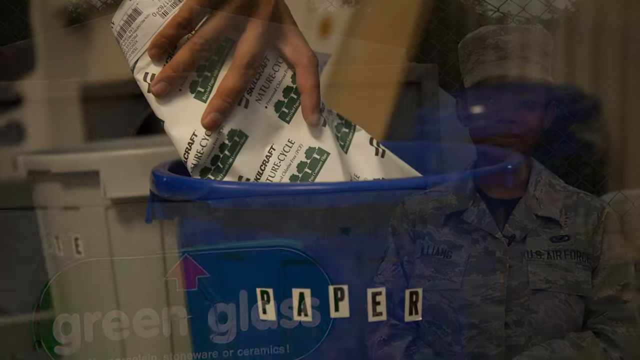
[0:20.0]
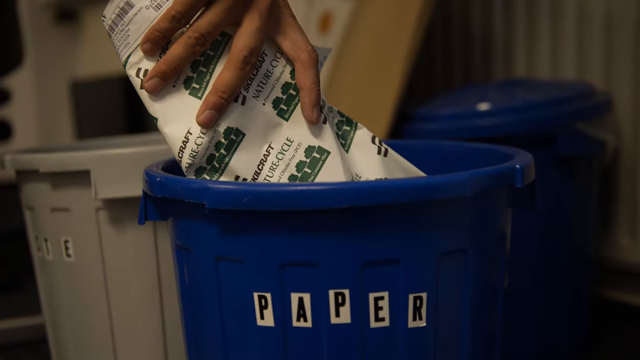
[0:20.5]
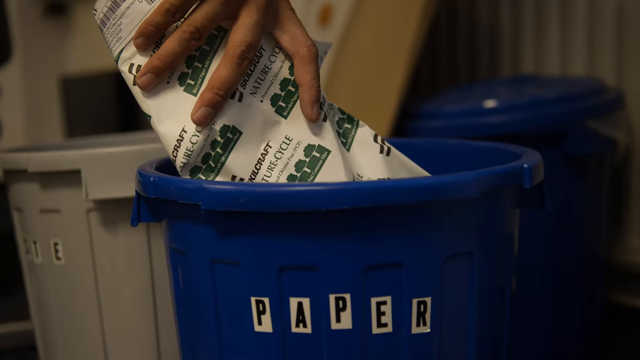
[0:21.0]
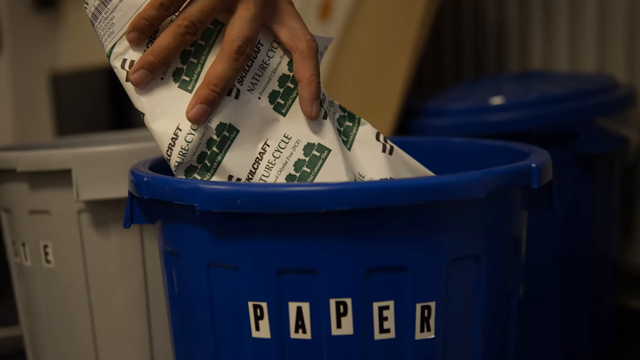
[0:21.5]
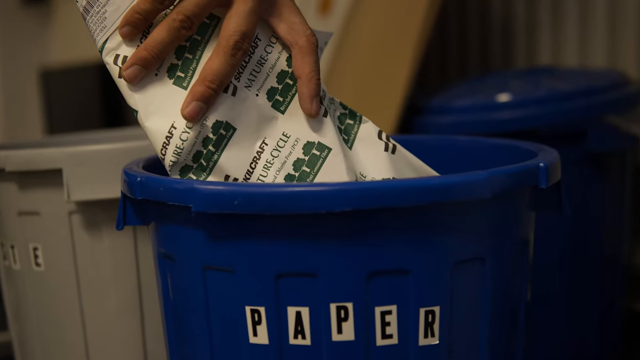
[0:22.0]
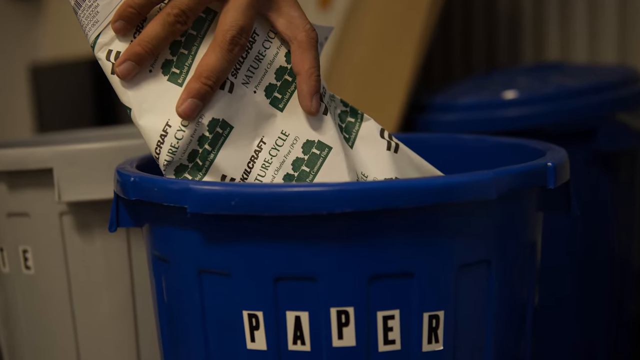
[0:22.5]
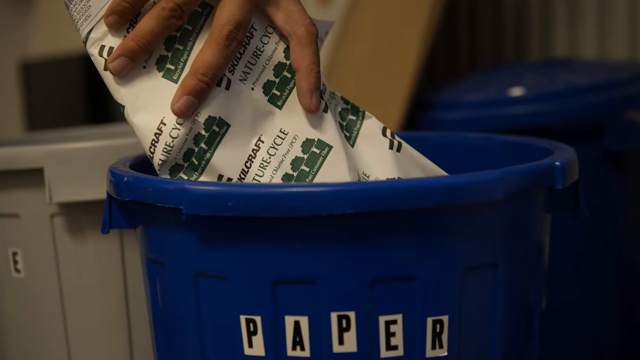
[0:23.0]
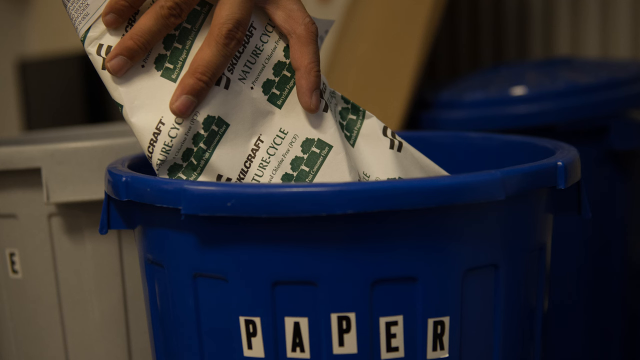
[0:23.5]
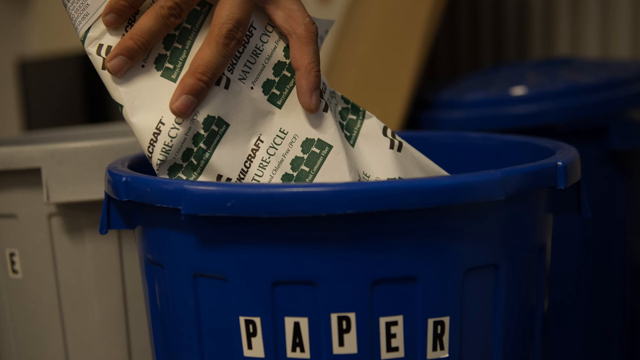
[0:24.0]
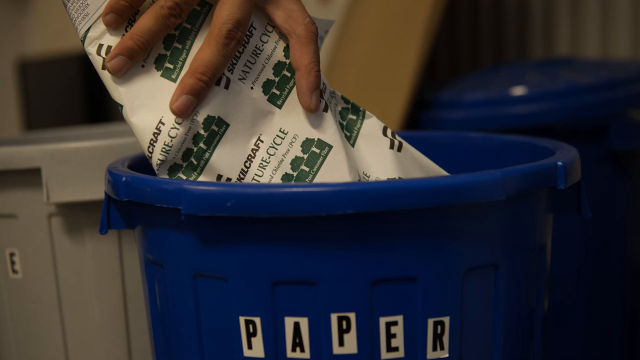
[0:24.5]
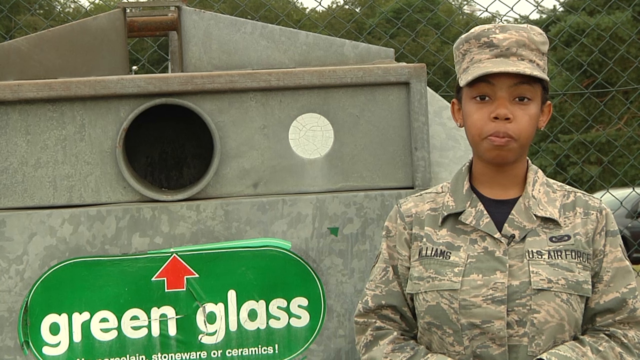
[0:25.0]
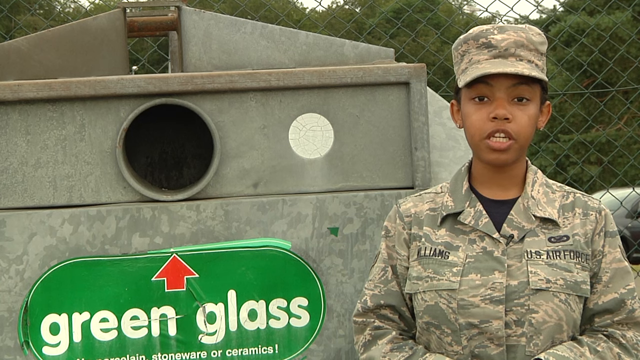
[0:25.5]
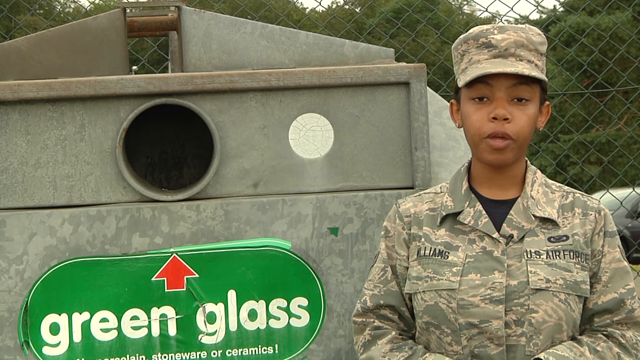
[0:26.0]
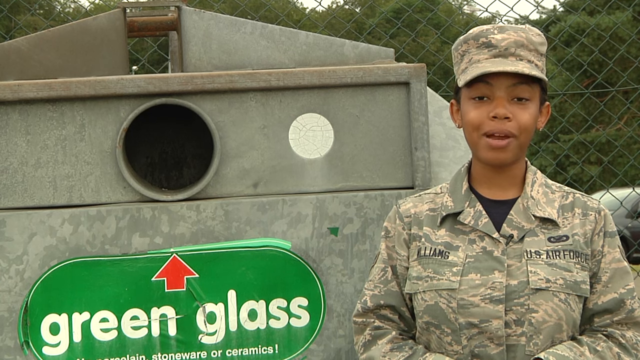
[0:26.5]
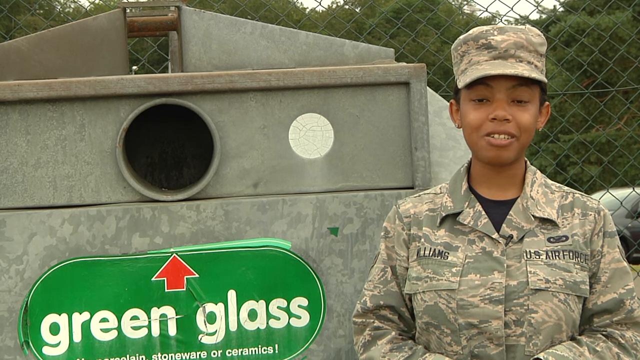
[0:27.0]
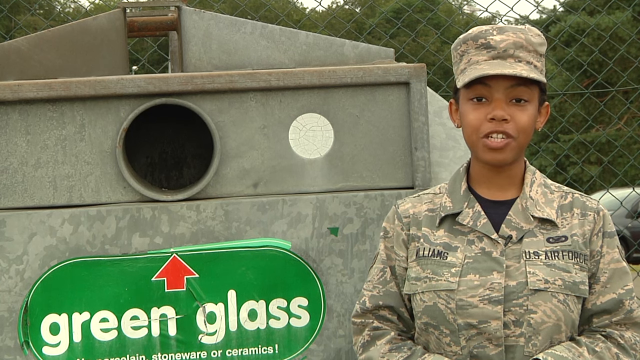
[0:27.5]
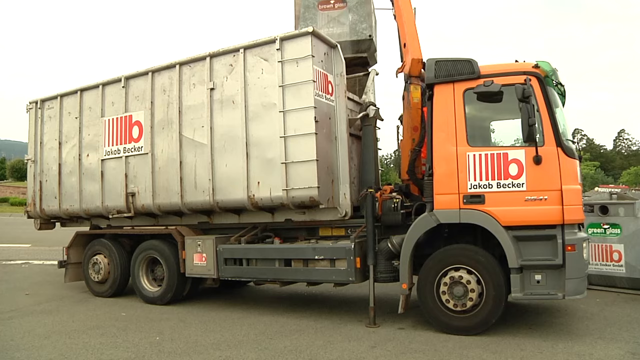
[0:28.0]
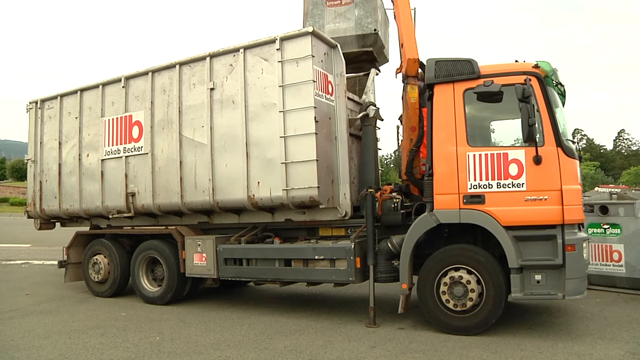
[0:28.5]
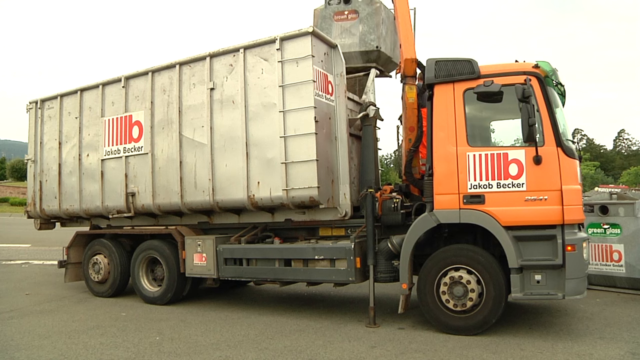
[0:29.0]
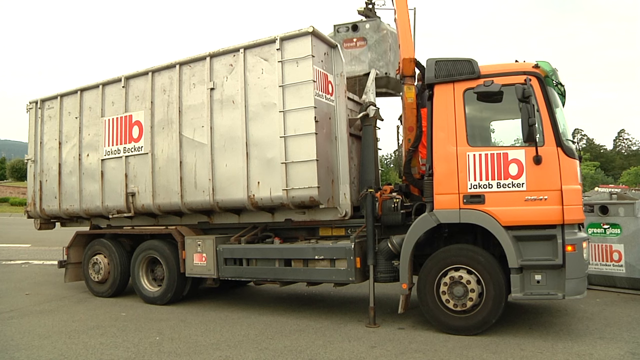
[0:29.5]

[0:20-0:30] A blue bucket labeled "paper" appears, and someone puts paper into it. Someone's hand is visible, and the Air Force lady continues talking. After that, a big truck with "jacob beggar" written on it empties some trash and puts it somewhere.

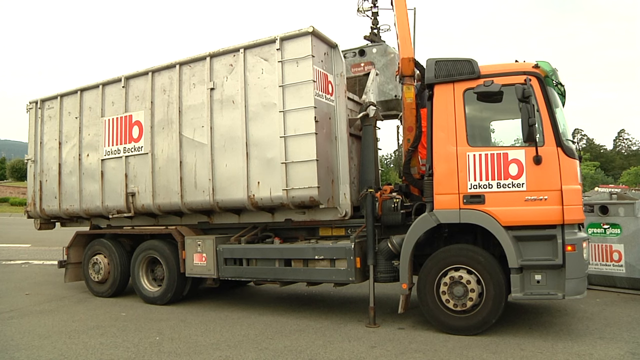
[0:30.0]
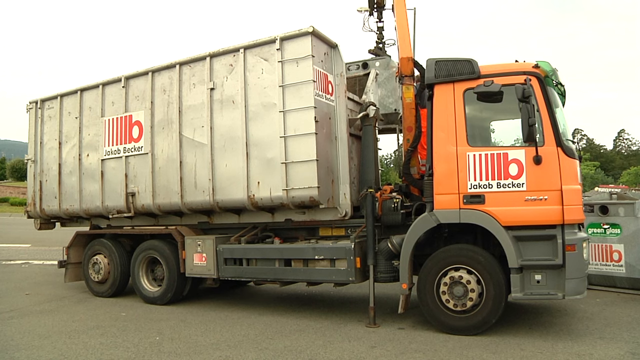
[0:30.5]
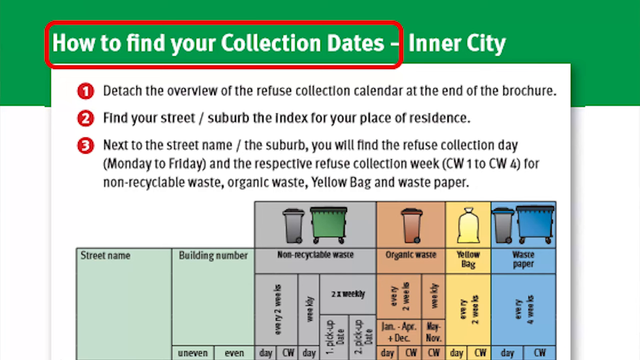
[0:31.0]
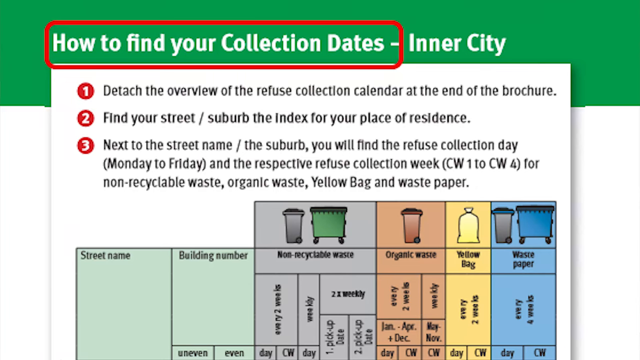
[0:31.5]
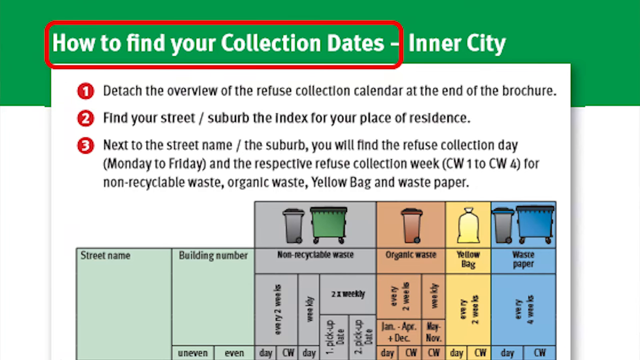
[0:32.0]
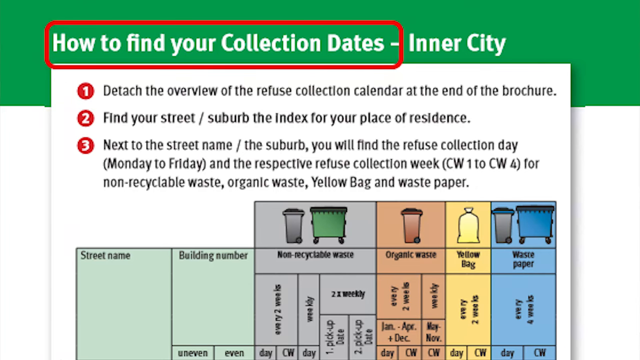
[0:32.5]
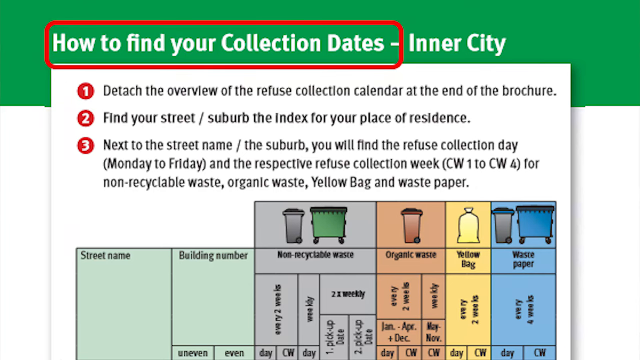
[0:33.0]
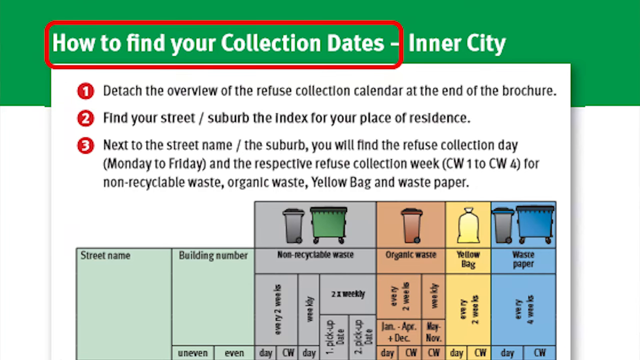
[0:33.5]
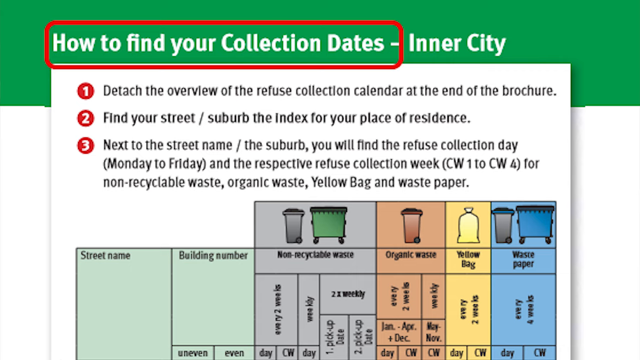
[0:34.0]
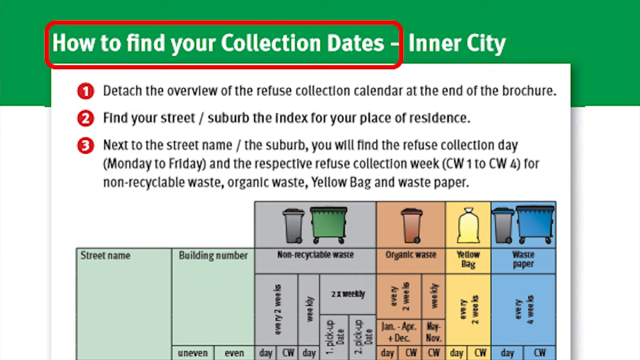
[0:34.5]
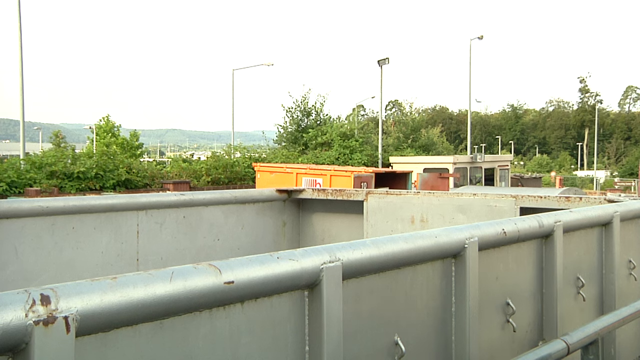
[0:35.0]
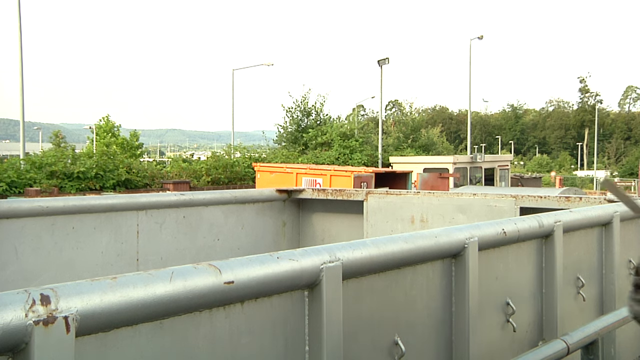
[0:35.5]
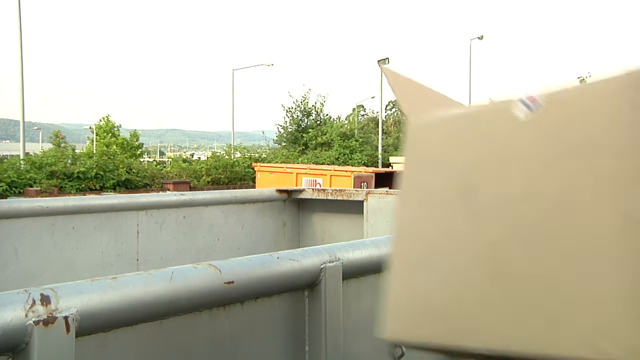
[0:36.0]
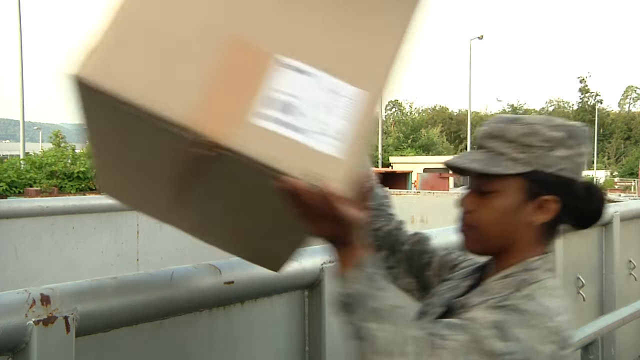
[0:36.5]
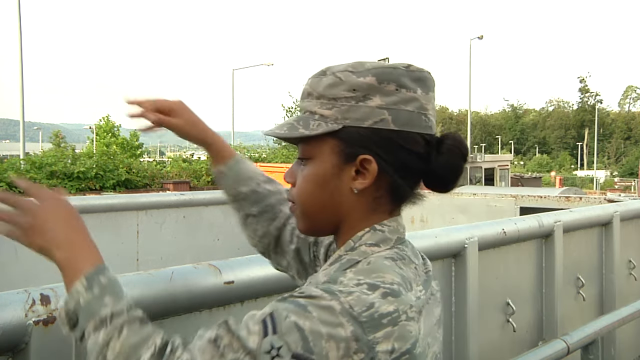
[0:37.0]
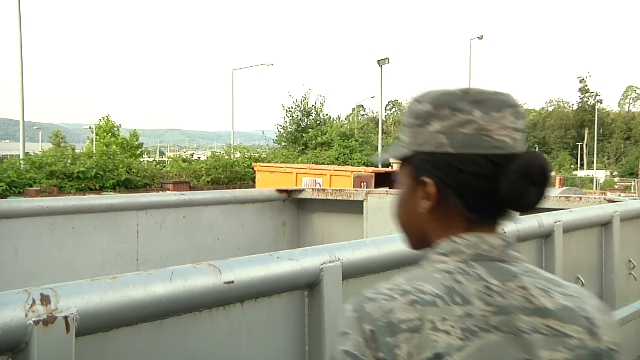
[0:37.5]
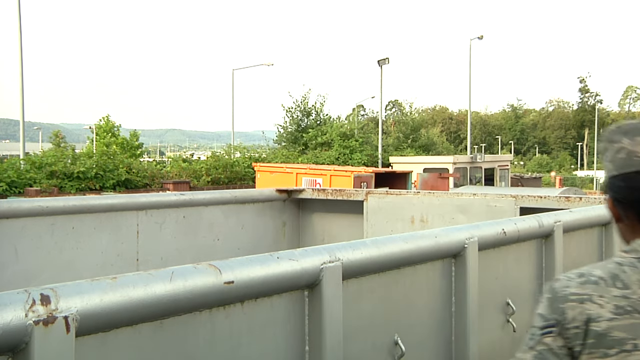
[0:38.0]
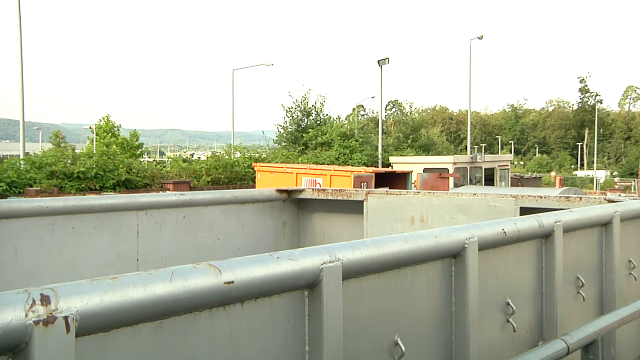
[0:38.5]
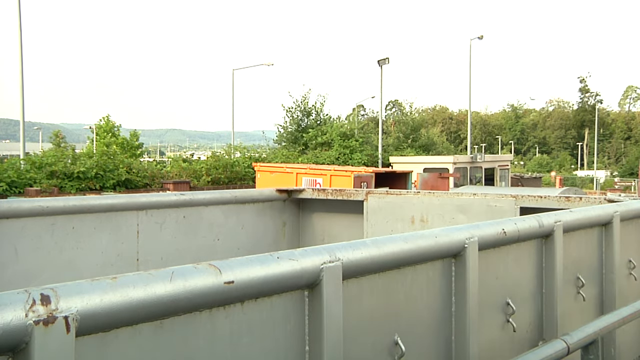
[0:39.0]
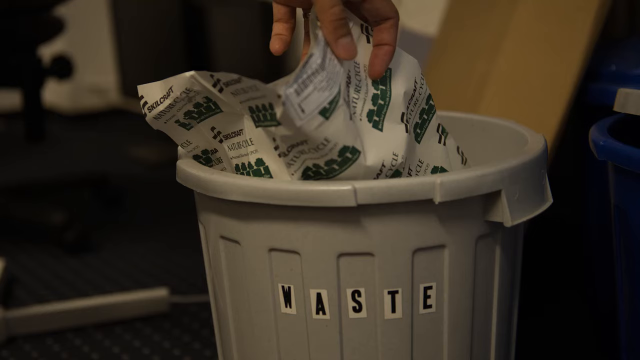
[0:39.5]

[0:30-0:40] The big truck appears, followed by a brochure with the heading "how to find a collection dates". The brochure mentions the "refuse collection calendar", finding a street in the index of a place of residence, and the "refuse collection day monday to friday in the respective refuse collection week", with entries such as "cw2" and "cw4" for non-recyclable waste and paper. Below the text is a diagram showing the street name, the building number, where non-recyclable waste and organic waste go, what the yellow bags are for, blue for waste paper, and the dates when and where the waste will be collected. Then there is possibly the area where all the waste has gone, and the Air Force lady throws things into the big tank.